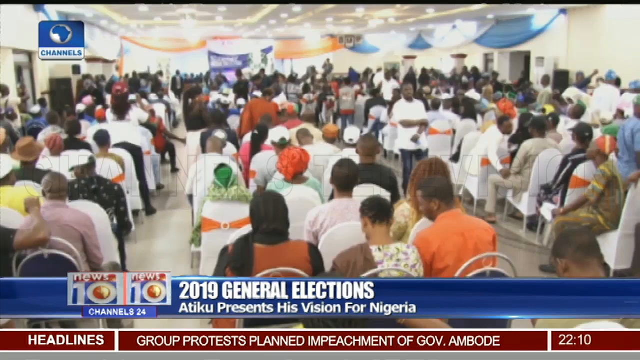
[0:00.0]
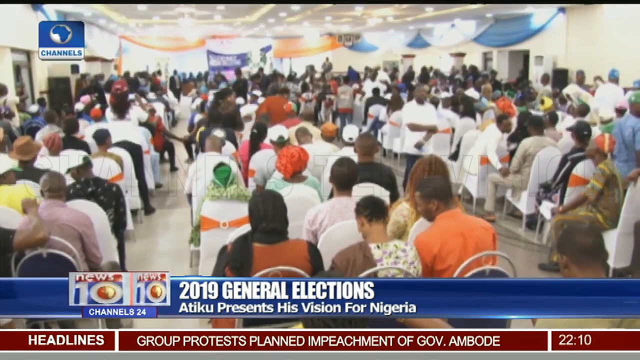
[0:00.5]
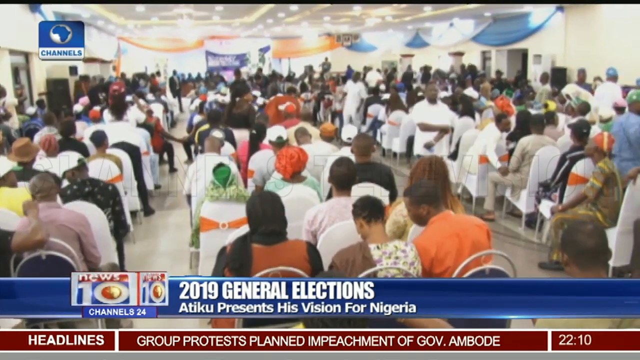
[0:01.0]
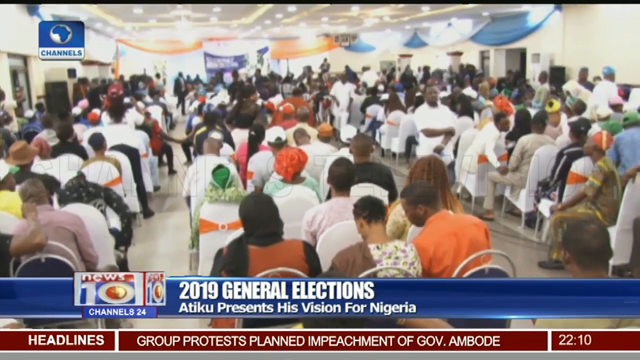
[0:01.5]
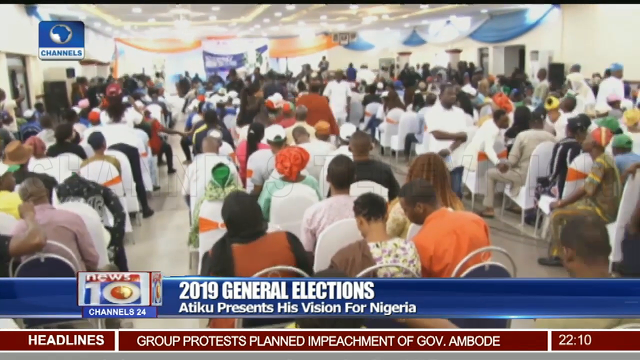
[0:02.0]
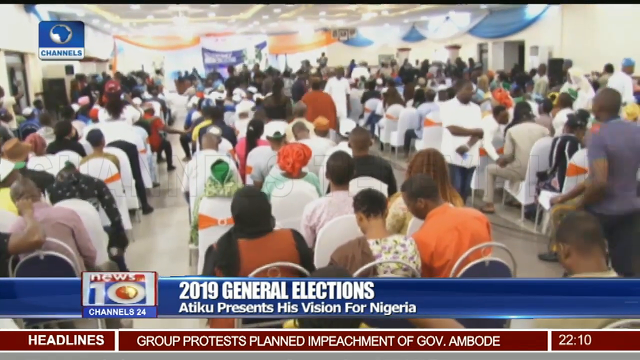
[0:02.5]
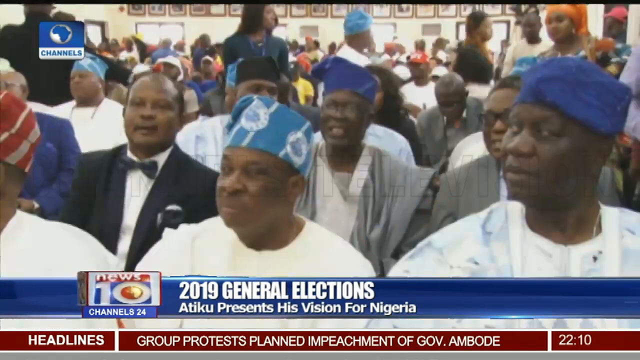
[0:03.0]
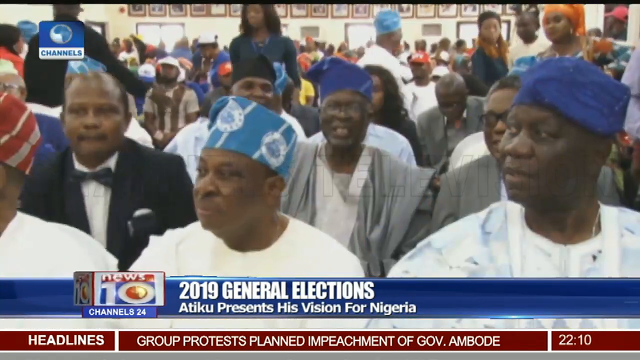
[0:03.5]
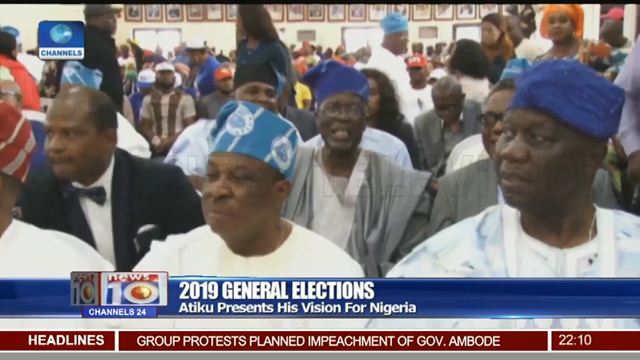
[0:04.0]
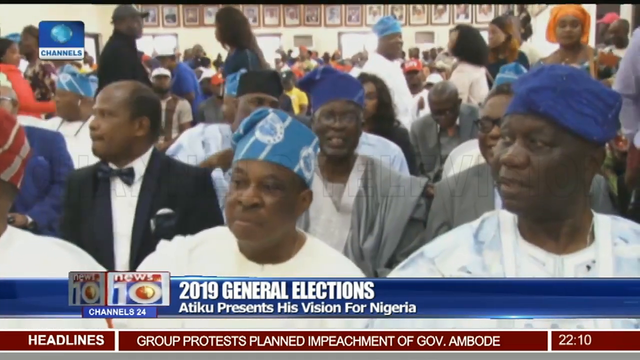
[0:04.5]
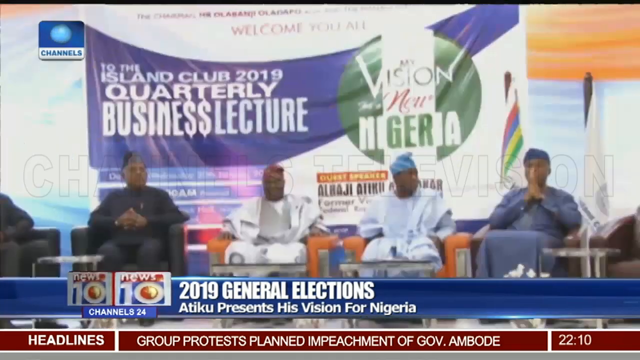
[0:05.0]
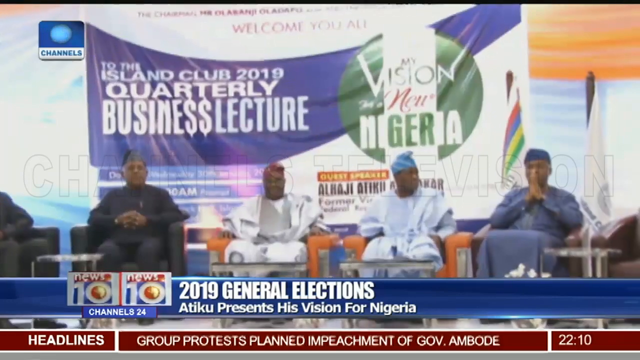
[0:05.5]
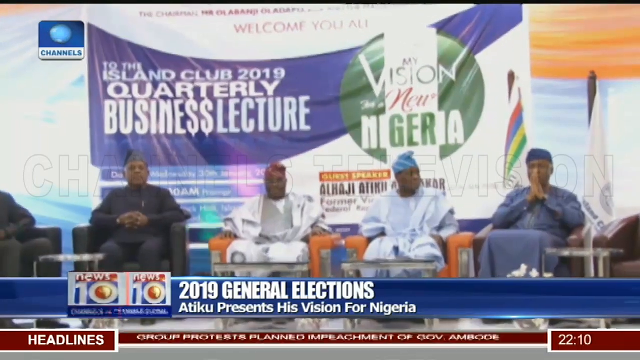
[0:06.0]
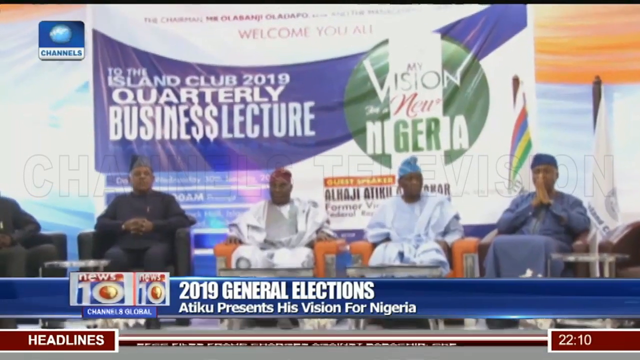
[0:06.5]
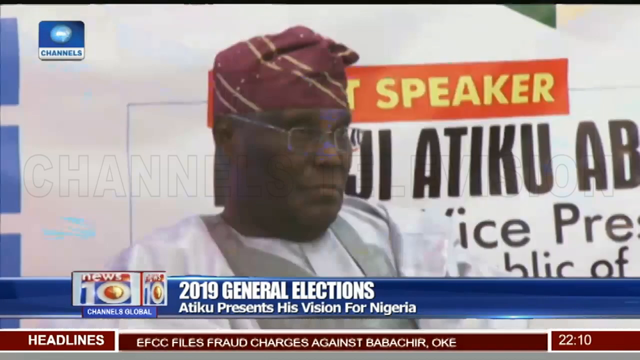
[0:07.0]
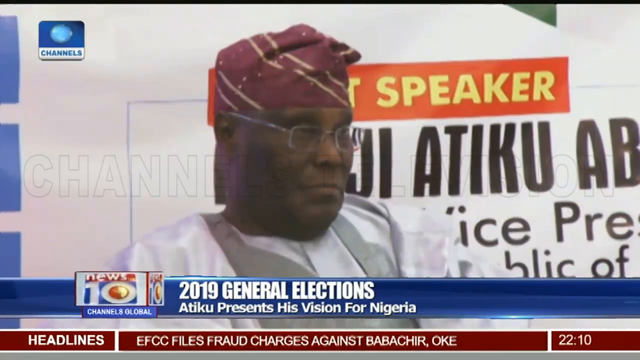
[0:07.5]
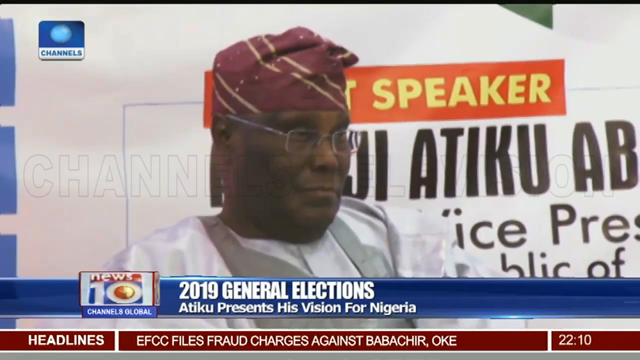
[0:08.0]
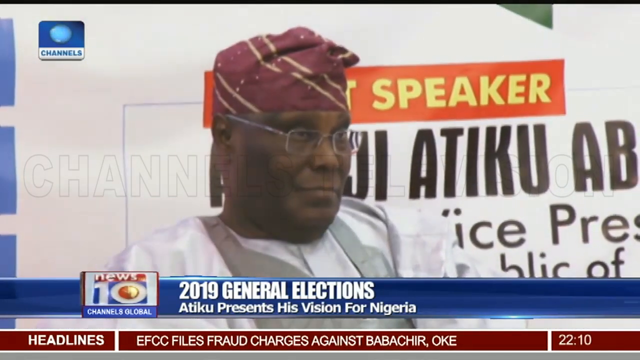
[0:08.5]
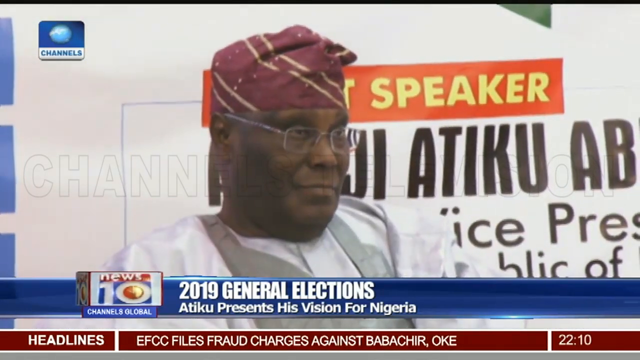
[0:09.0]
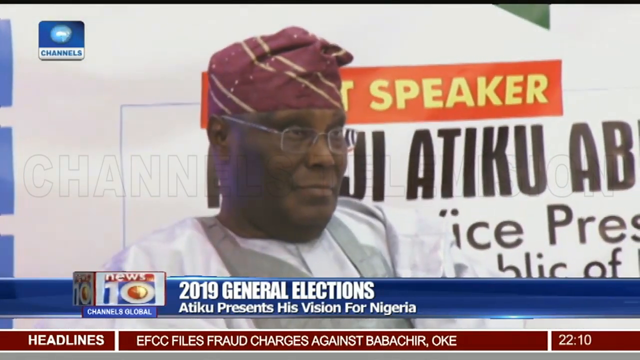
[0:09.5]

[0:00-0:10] Many people wear white clothes and orange t-shirts, and some others wear an orange scarf. A person wears glasses. It appears to be a meeting, with a lot of people sitting; it is a respectful meeting. All of the people are Black.